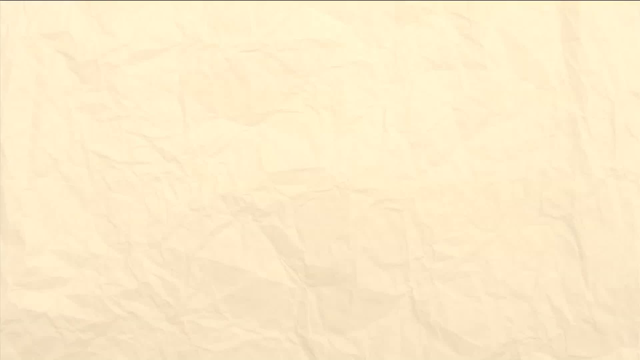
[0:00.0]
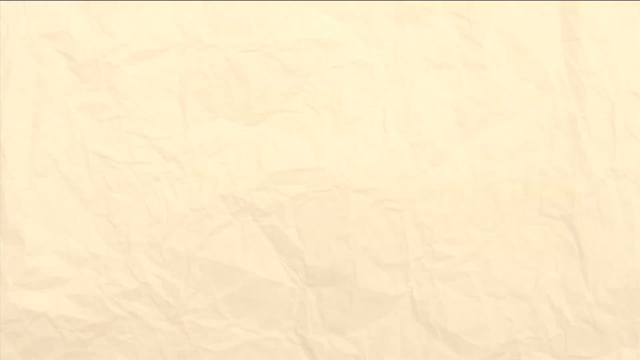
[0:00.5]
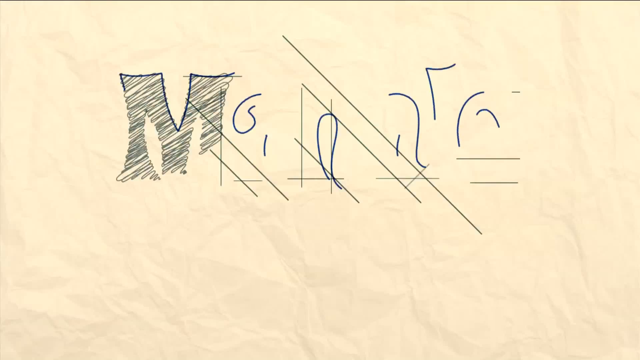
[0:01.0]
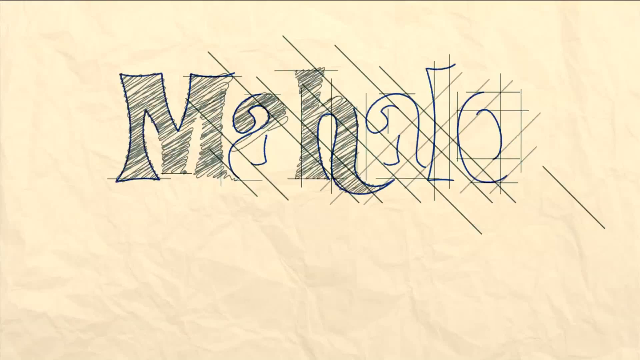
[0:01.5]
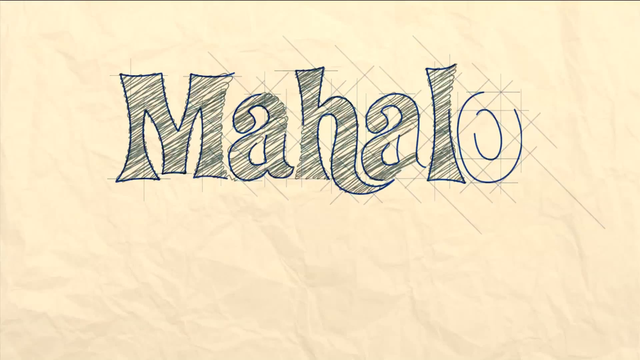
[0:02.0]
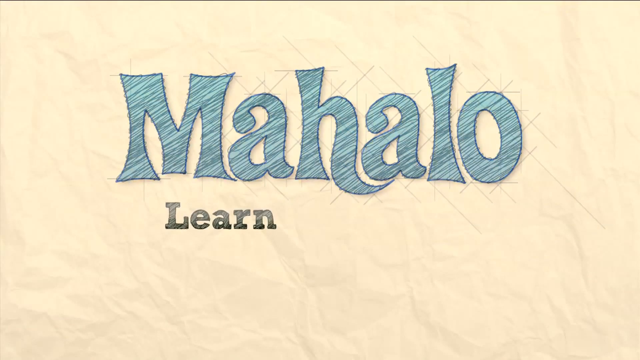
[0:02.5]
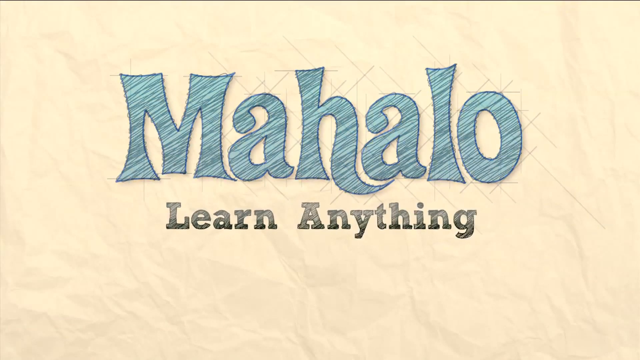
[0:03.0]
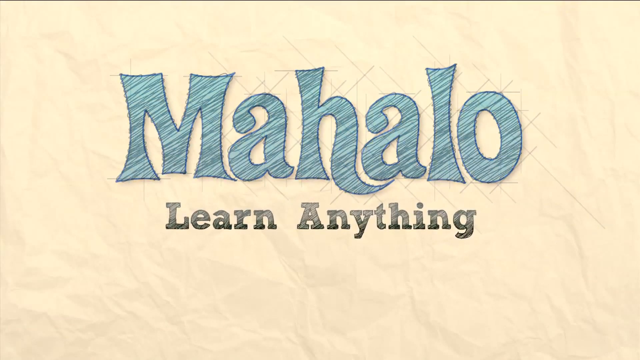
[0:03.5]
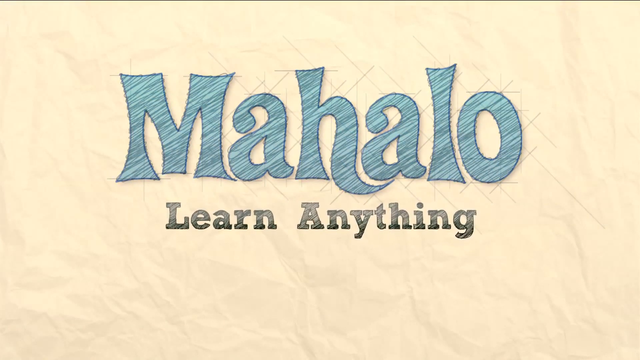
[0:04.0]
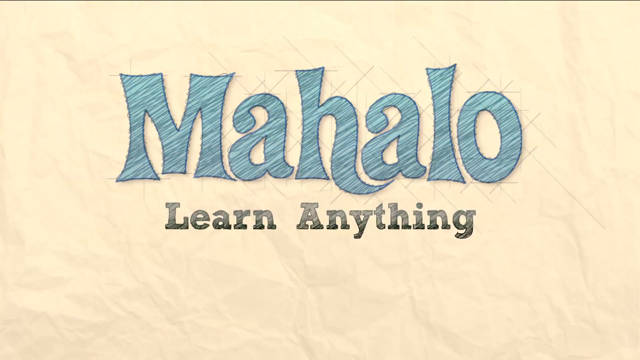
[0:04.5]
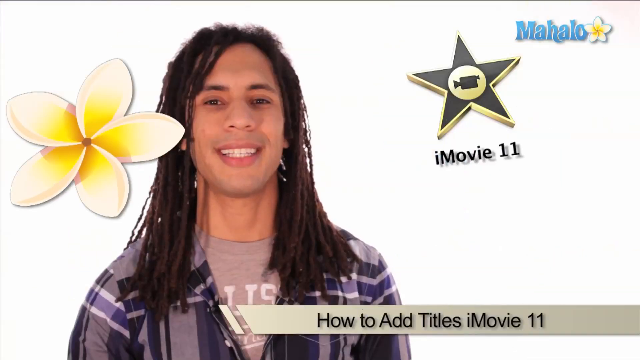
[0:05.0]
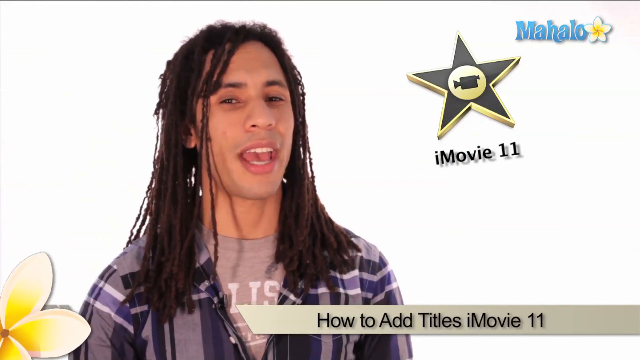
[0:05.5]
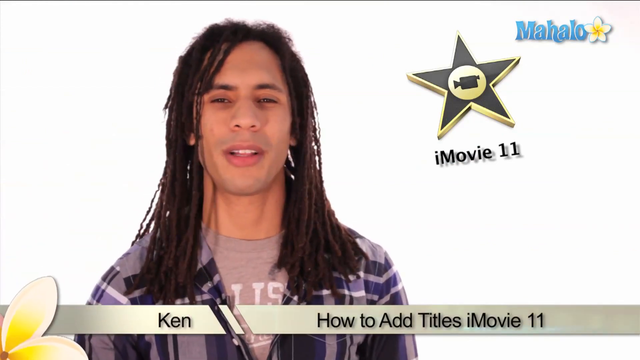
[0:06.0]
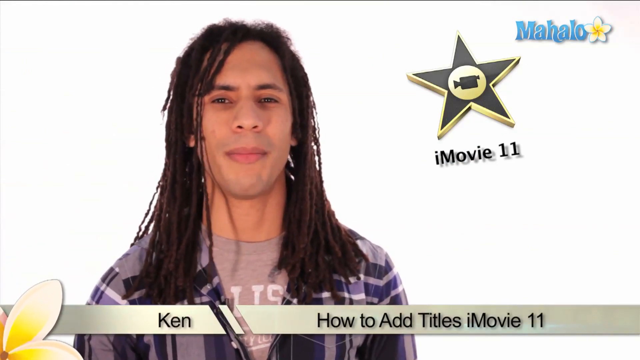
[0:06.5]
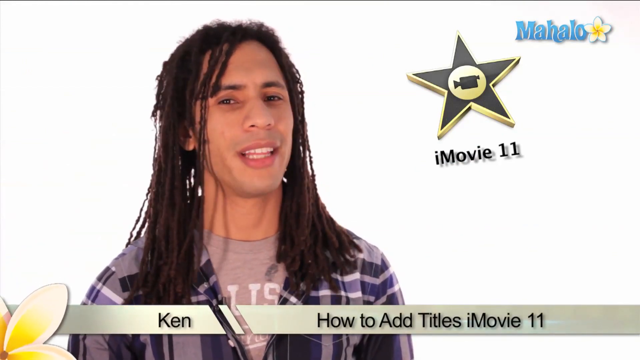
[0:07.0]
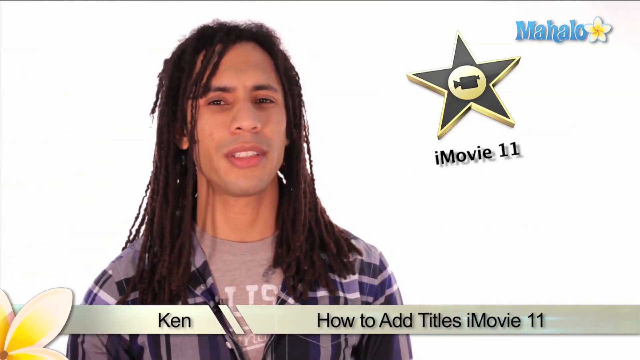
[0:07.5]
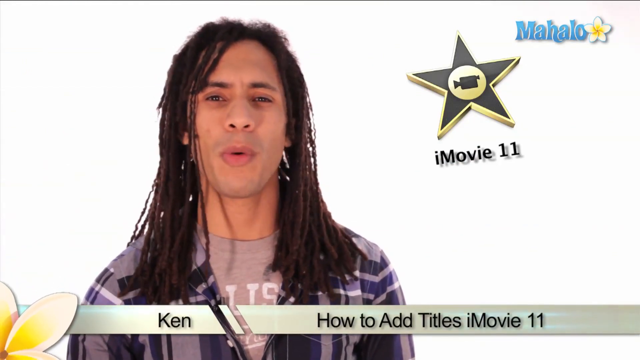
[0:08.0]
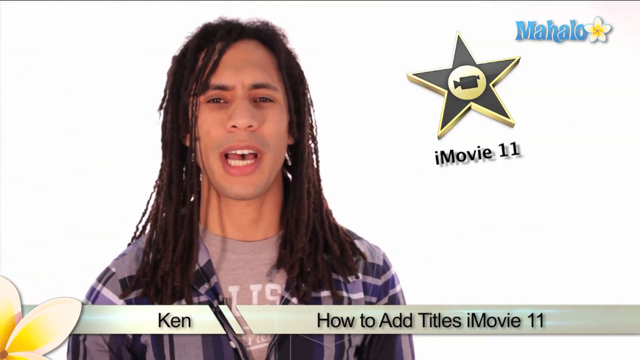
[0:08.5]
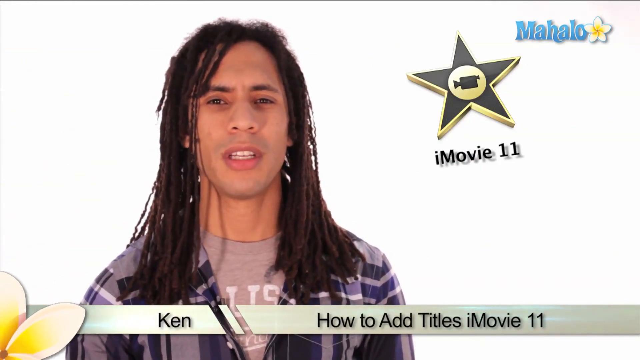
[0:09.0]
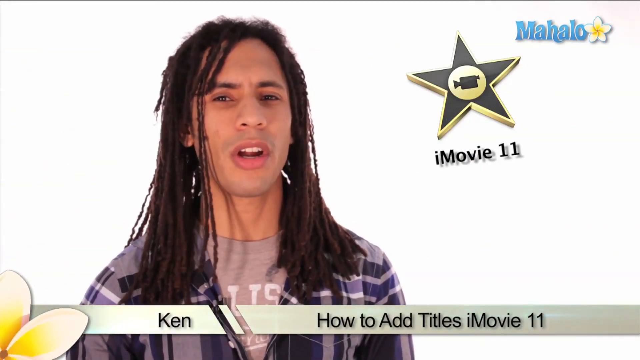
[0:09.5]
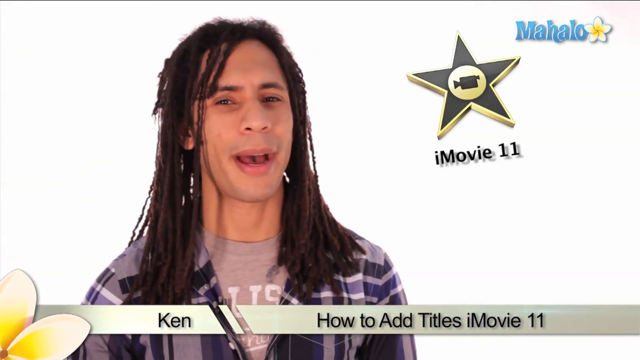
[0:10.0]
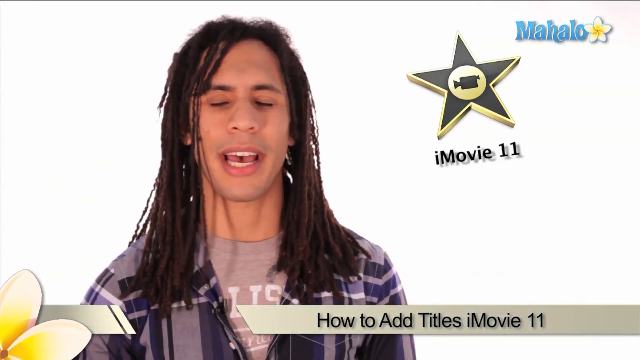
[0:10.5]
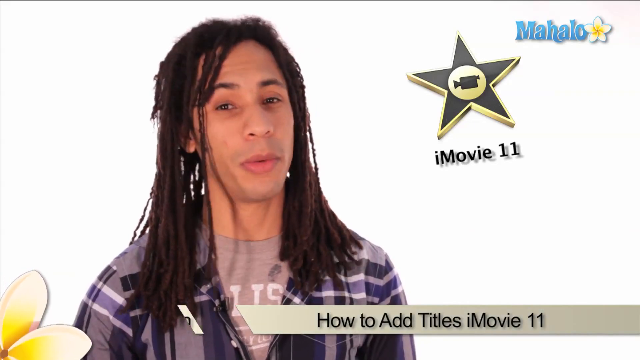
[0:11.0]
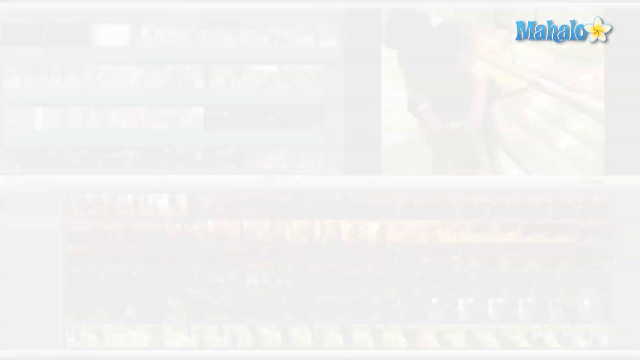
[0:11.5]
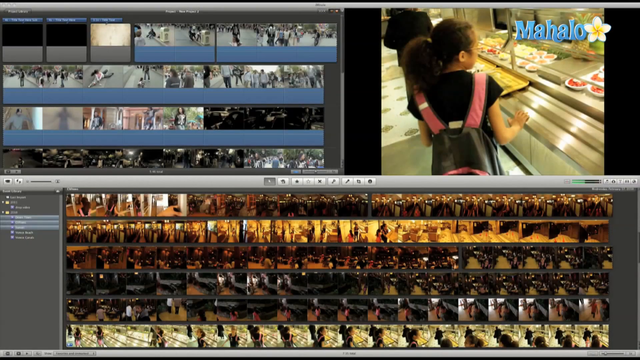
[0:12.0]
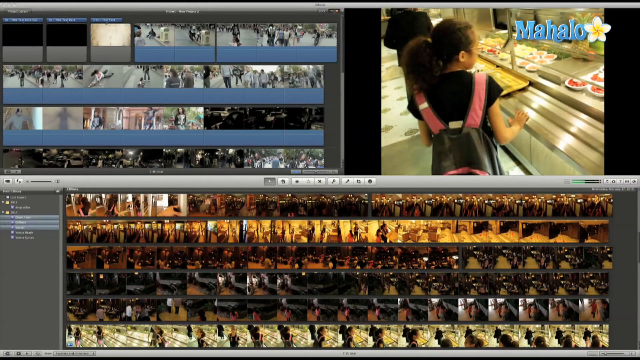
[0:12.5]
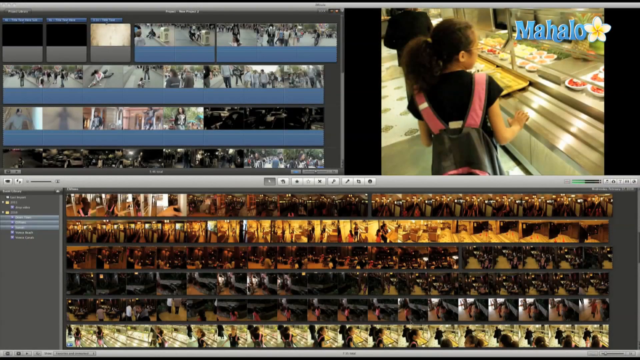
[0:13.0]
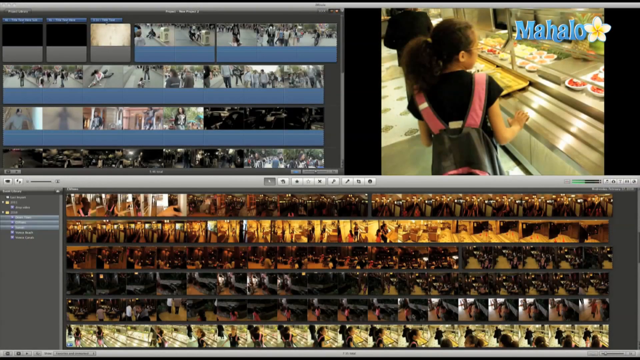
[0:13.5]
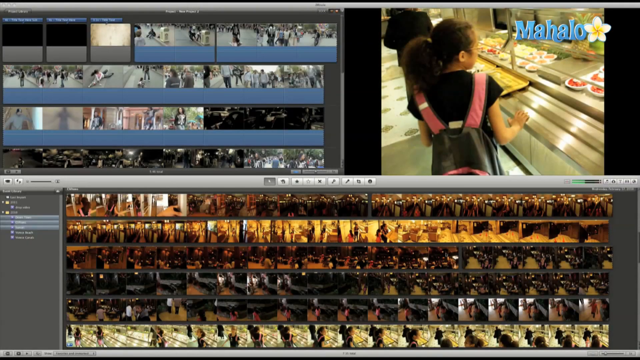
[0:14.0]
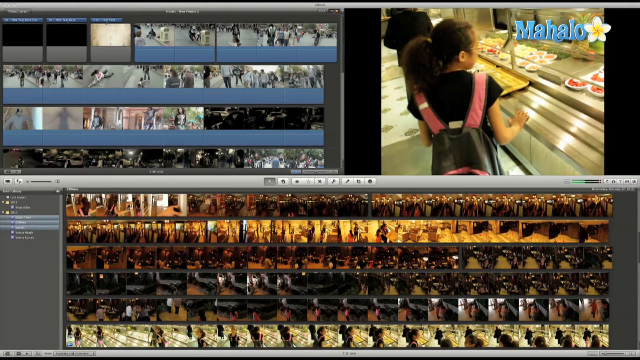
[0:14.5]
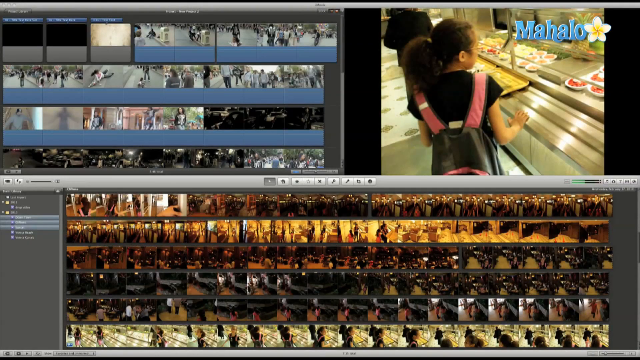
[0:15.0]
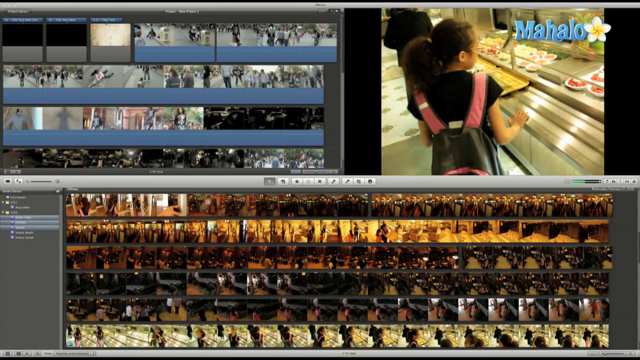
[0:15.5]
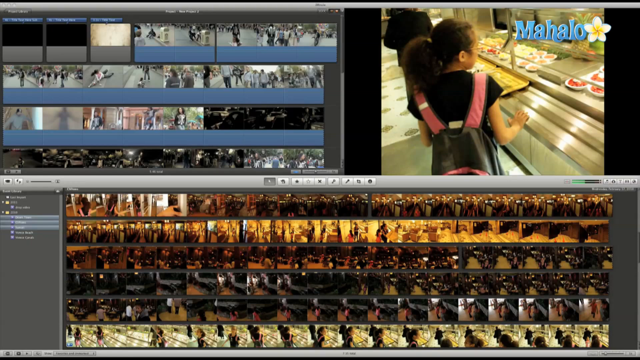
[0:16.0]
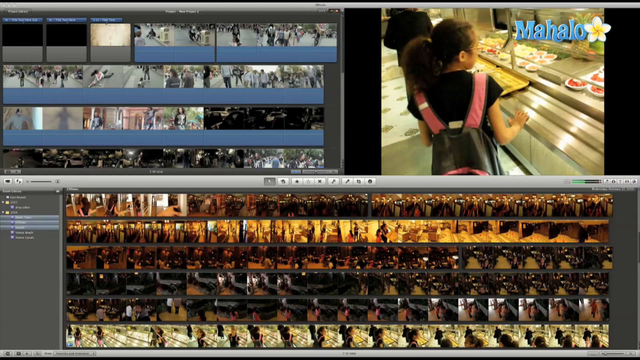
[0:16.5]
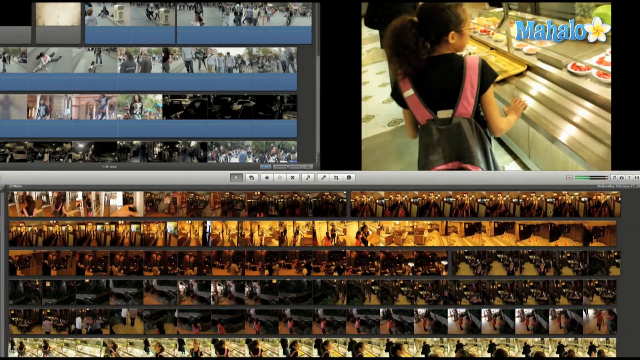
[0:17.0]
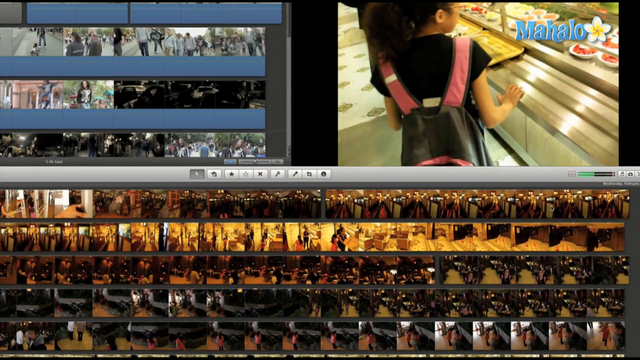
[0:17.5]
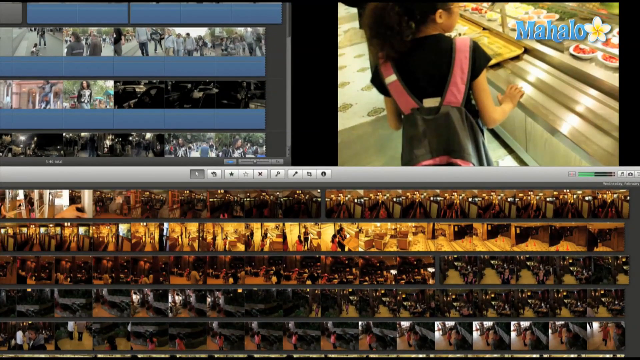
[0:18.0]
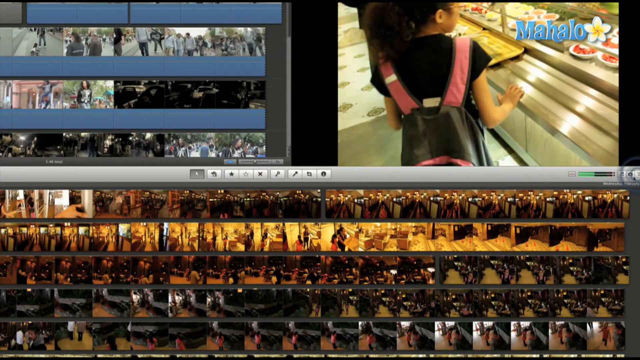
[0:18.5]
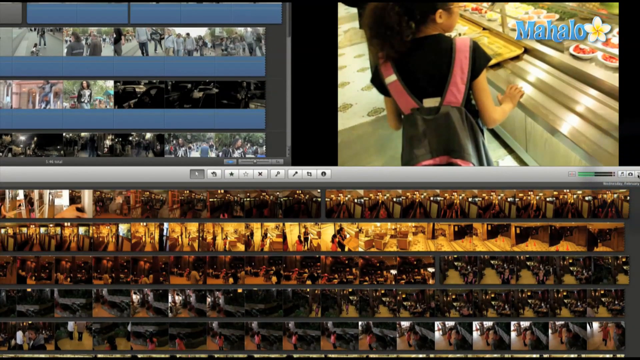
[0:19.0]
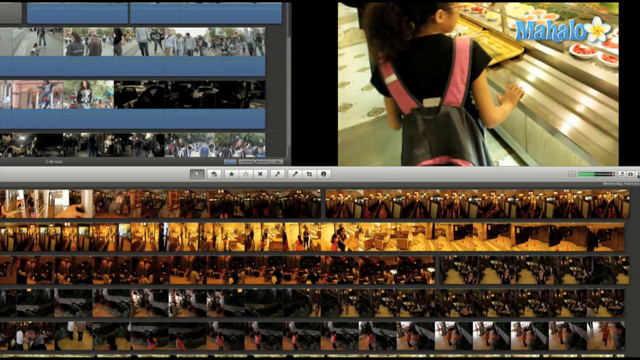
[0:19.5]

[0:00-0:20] A person with long black dreadlocks appears, shown only from the upper body and facing the viewer while talking. He wears a dark T-shirt over a grey T-shirt with "US" written on it. The background is white. In the top right corner is the channel name, "Mahalo", written in blue with a white flower. To the person's right is a gold and black star with the text "iMovie 11". Text at the bottom reads "Ken. How to add title iMovies 11", which identifies the presenter as Ken. The iMovie application then appears, showing the footage being edited divided into different scenes, along with play, preview and rewind buttons.